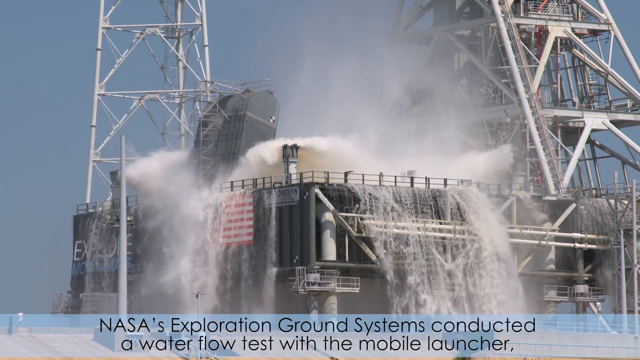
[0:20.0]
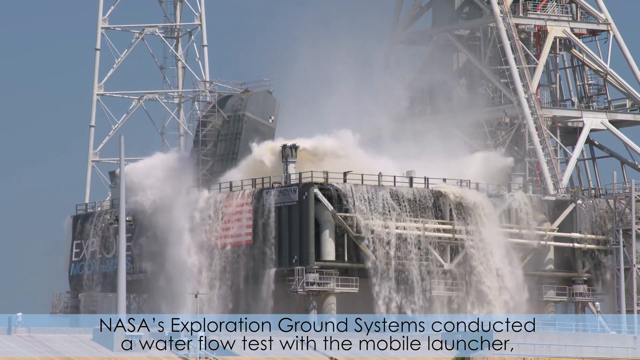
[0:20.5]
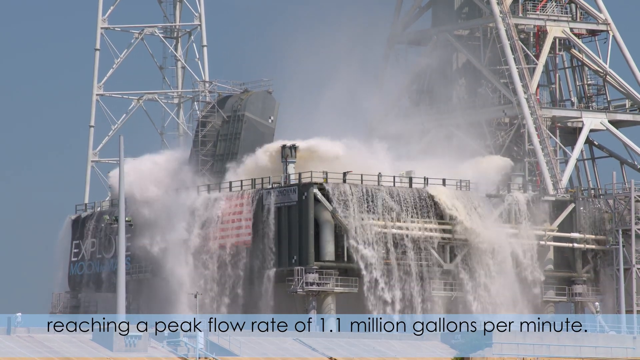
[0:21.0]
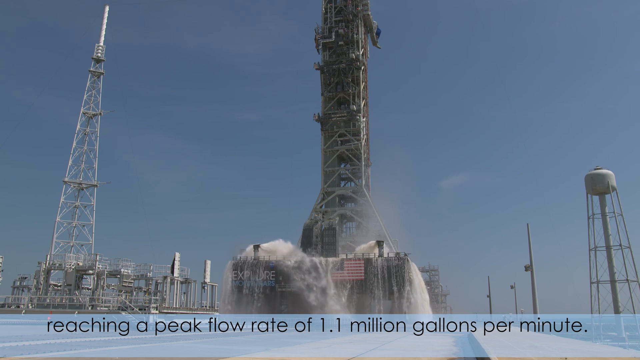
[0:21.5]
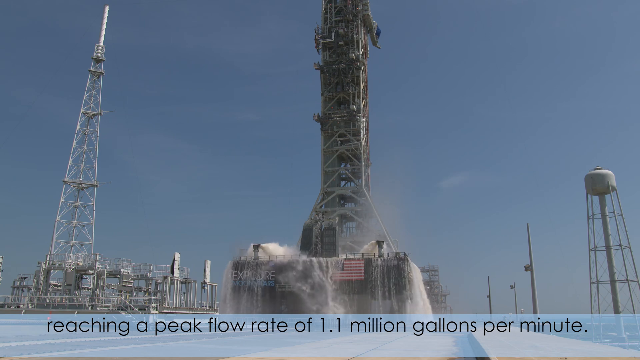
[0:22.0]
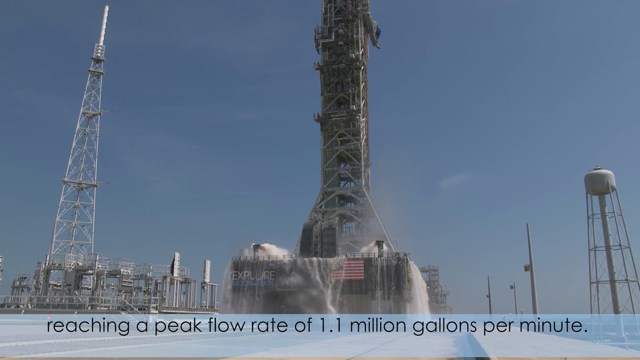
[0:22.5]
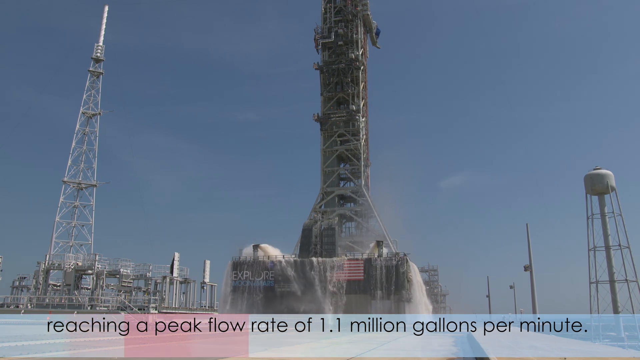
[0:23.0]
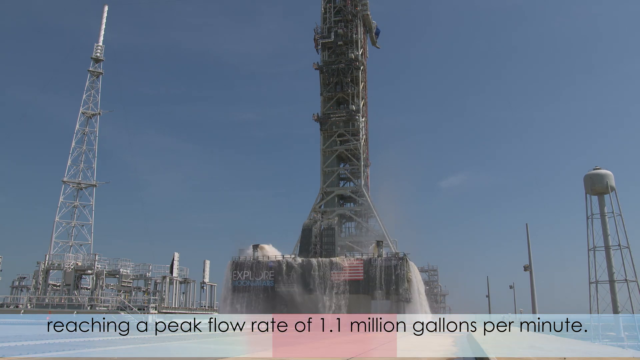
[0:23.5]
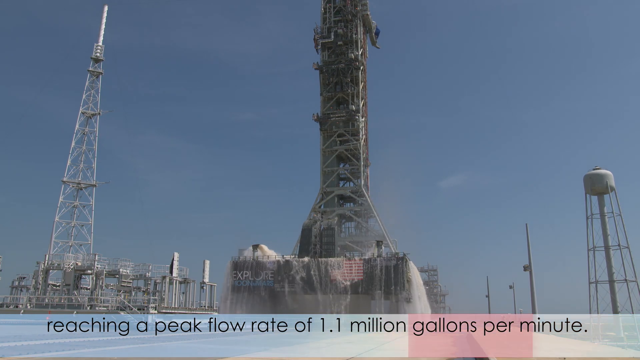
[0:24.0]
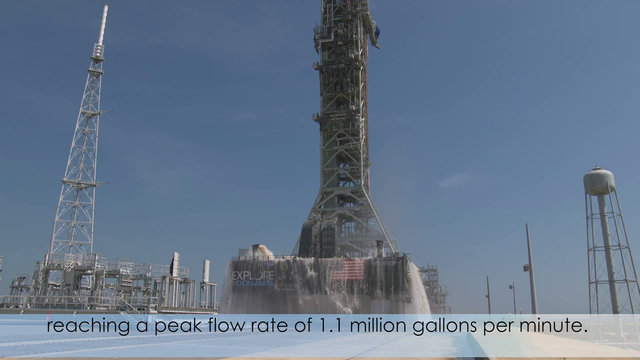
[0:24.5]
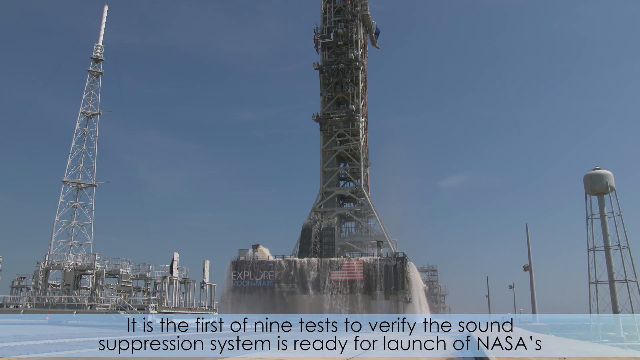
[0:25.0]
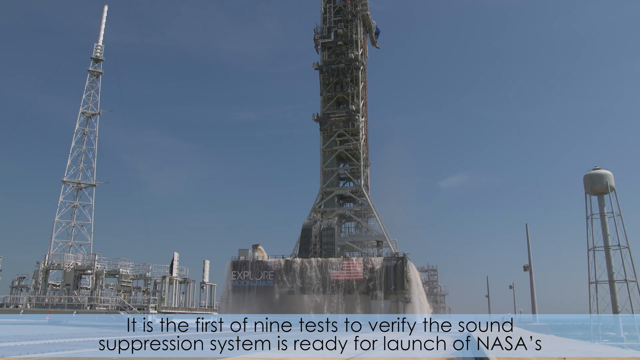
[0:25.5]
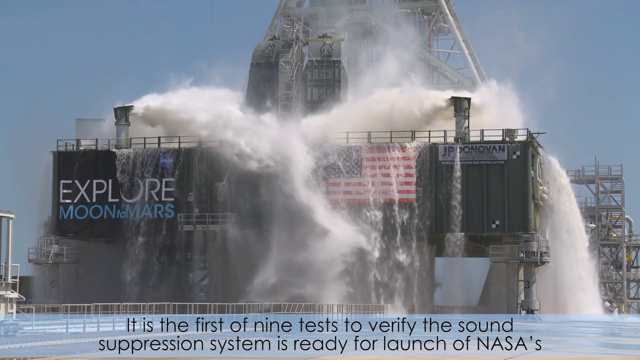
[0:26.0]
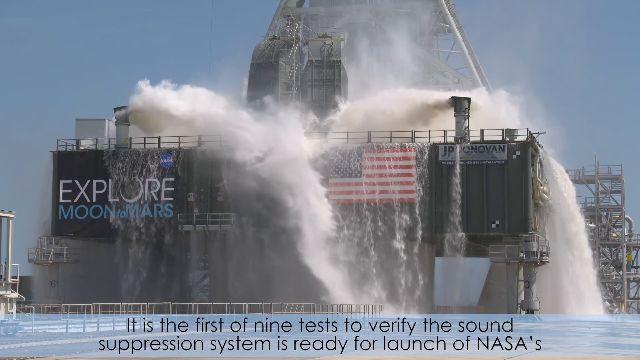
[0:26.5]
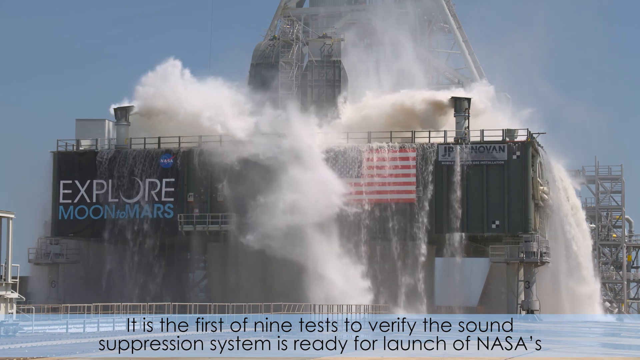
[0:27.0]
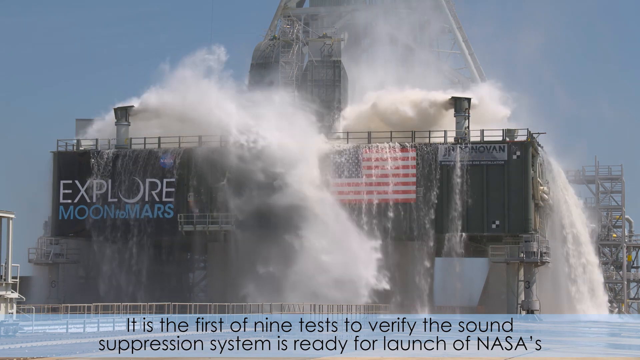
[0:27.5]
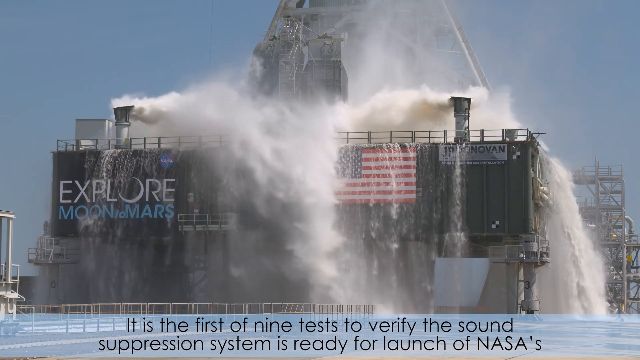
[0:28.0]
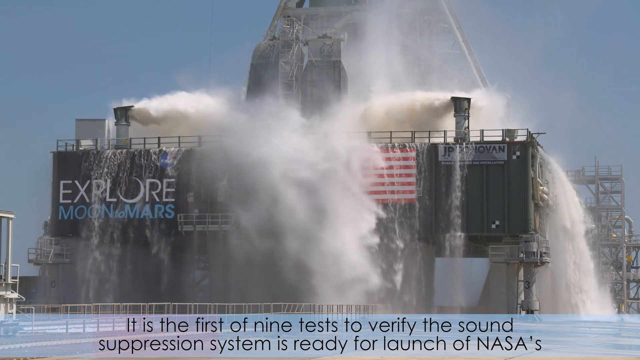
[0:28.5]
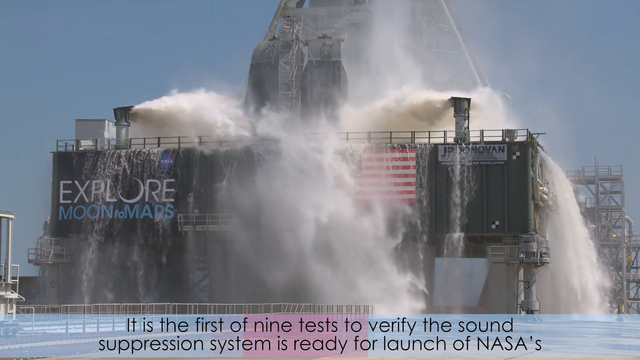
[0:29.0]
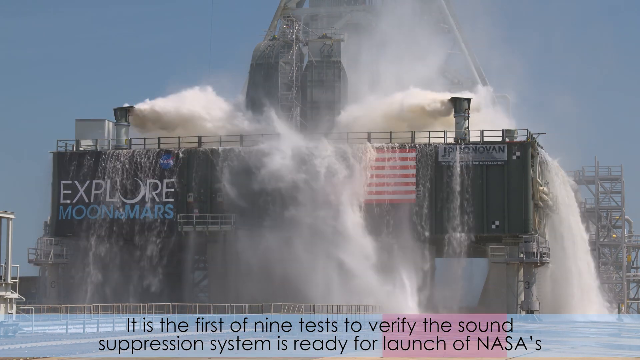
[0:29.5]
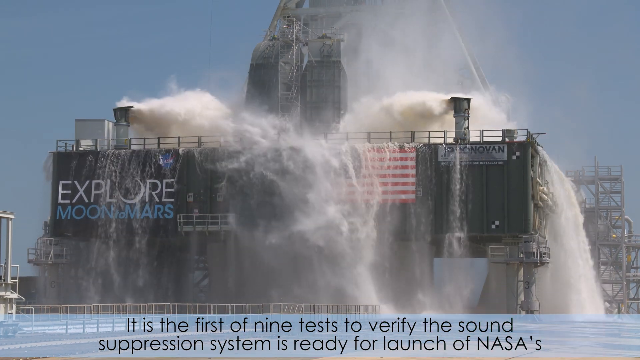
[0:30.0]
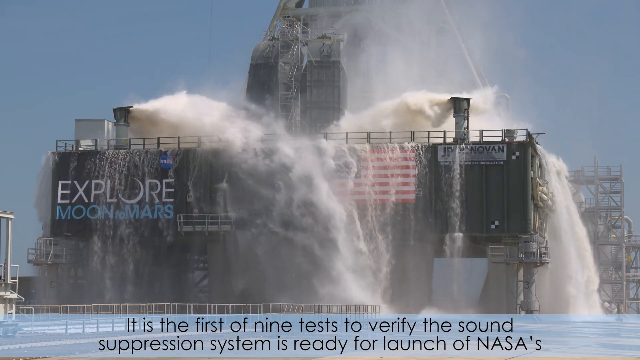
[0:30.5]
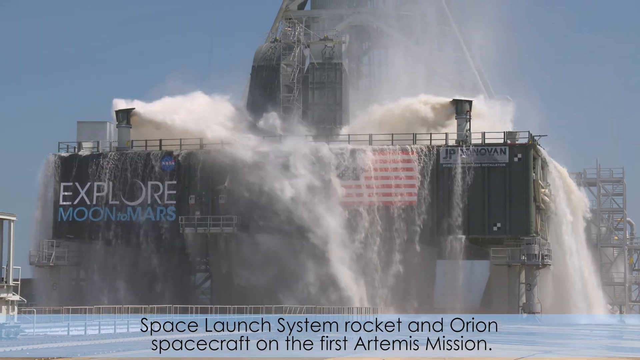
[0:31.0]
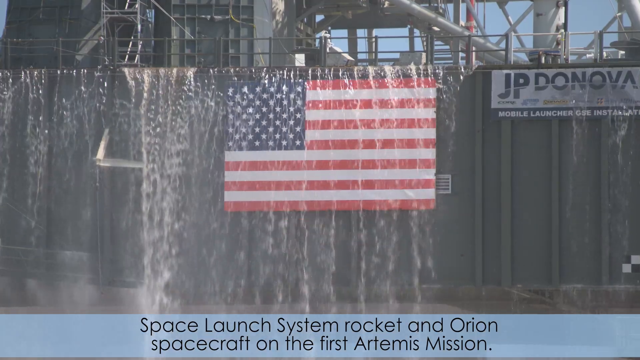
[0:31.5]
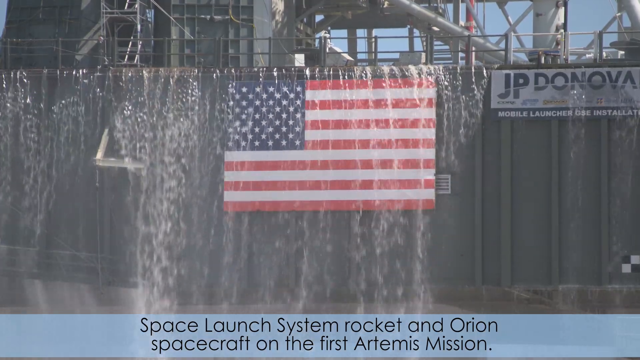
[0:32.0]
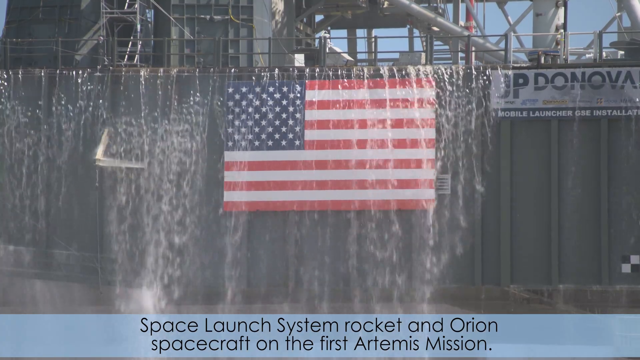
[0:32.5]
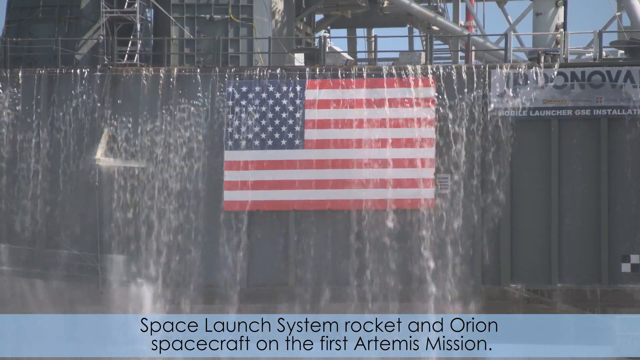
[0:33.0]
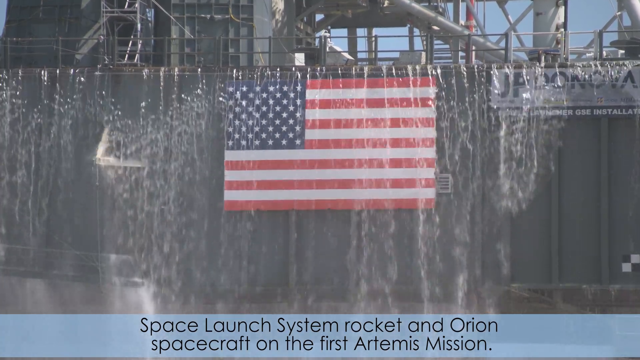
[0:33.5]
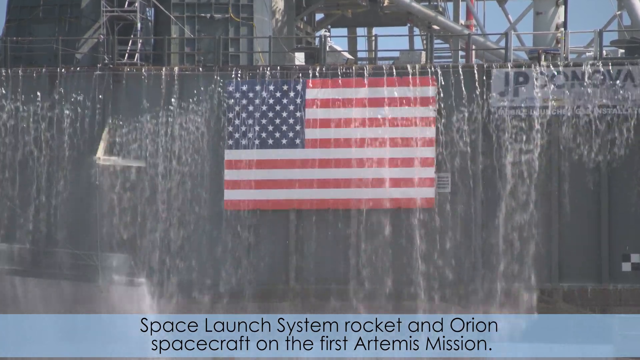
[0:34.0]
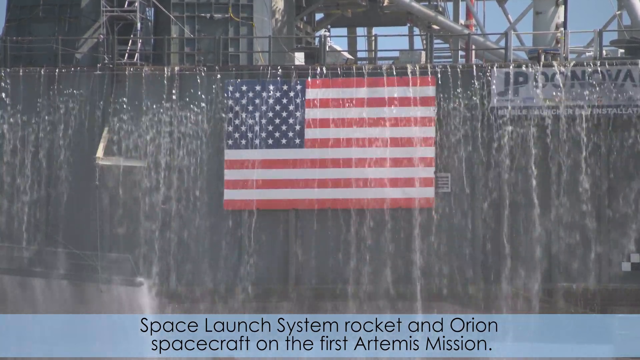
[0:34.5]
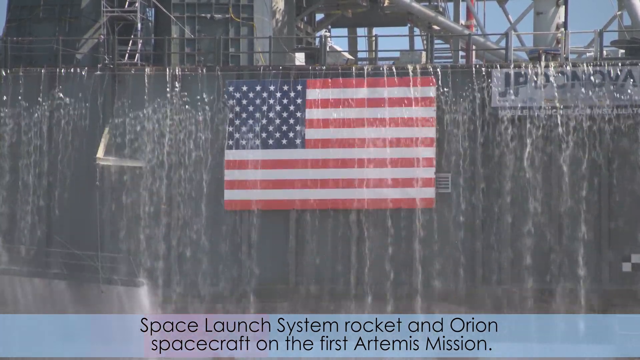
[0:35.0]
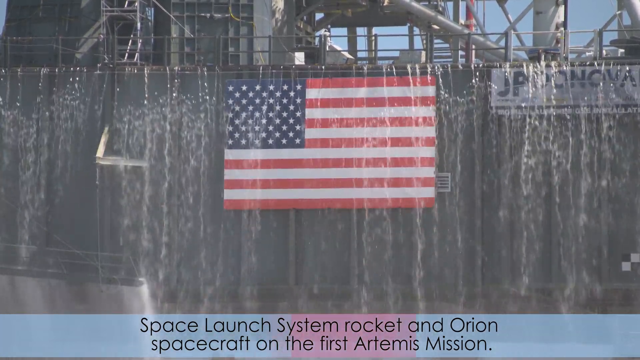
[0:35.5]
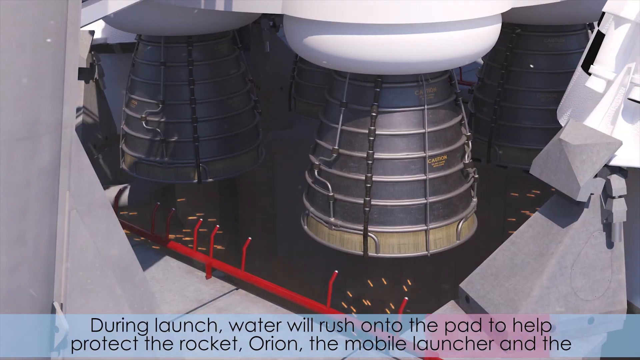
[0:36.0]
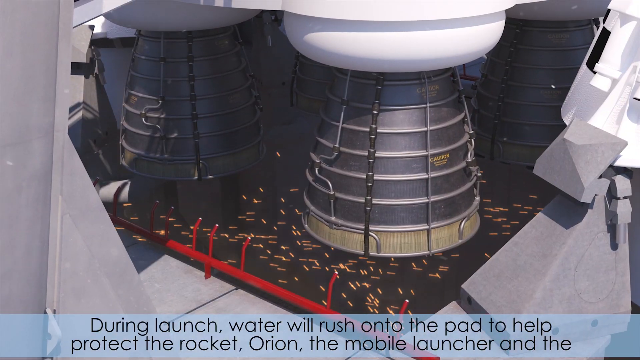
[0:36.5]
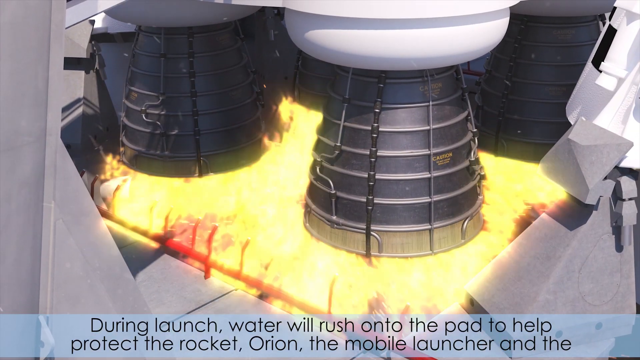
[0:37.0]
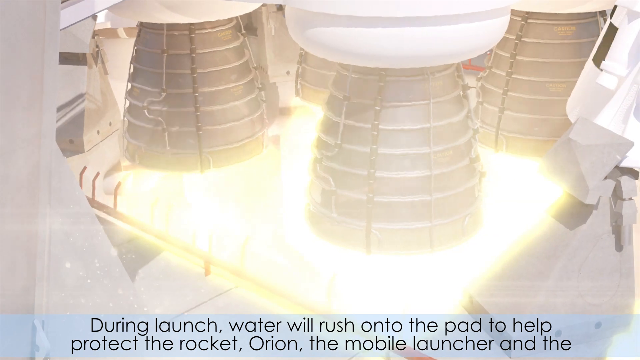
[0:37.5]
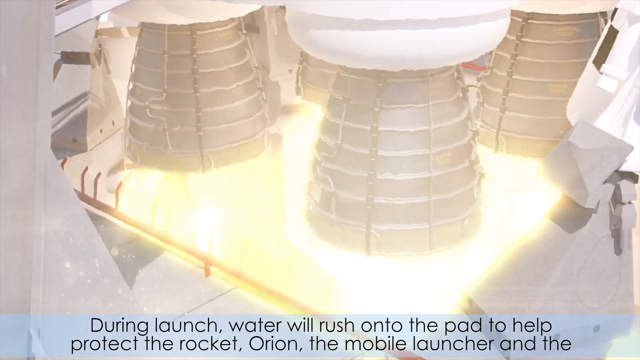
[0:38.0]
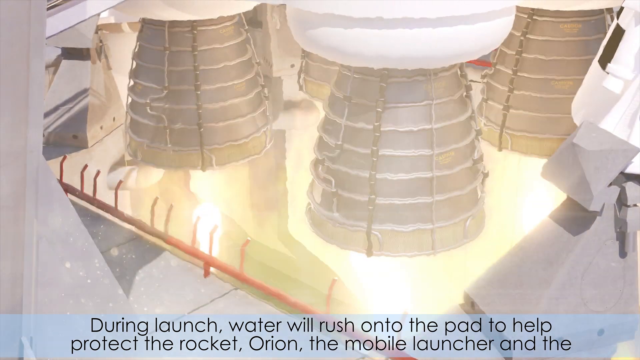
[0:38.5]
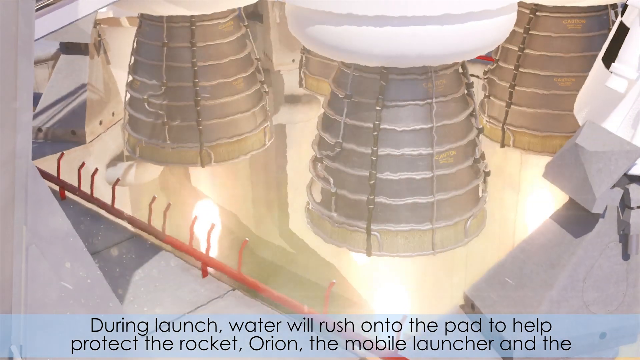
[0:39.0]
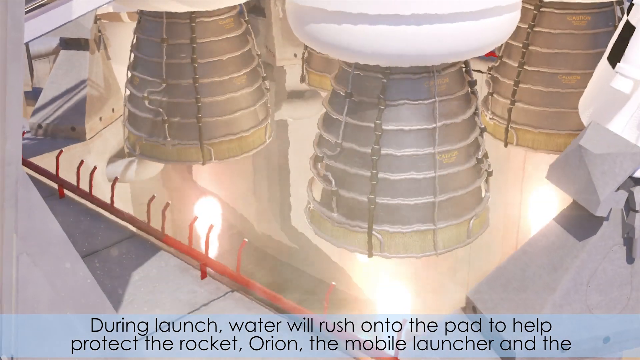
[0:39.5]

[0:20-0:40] A rocket ship launch pad has large scaffolding structures on its right and left sides. The flat section of the raised pad is being blasted with a large amount of water coming from four different points, basically forming waterfalls on the edges. Text at the bottom of the screen reads "reaching a peak flow rate of 1.1 million gallons per minute". The camera zooms out even further, showing more of the structure: on the left is a tall tower made of various metal scaffolding, and in the center is the launch platform for rockets, with four visible waterspouts blasting the pad with white water. New text appears reading "it is the first of nine tests to verify the sound suppression system is ready for launch of NASA's". The footage cuts to a close-up of the rocket ship platform, with water continuing to blast it from the pipes. Text appears reading "space launch system rocket and Orion spacecraft". The close-up shows part of the platform's side, with a large amount of water running down the sides like waterfalls, and focuses on the American flag on the side of the platform.